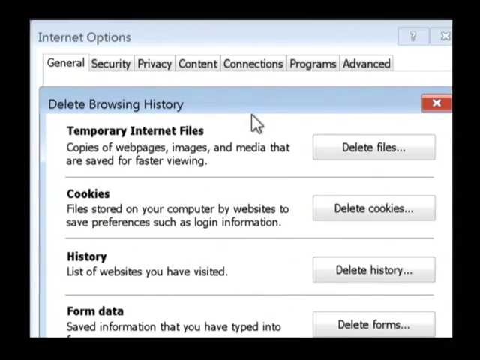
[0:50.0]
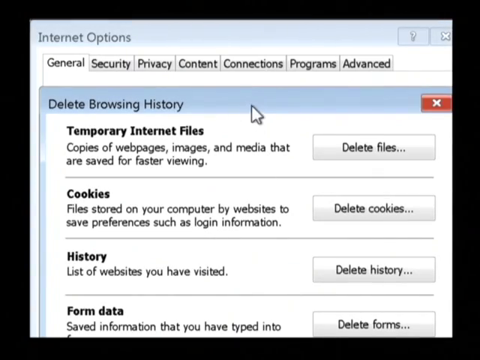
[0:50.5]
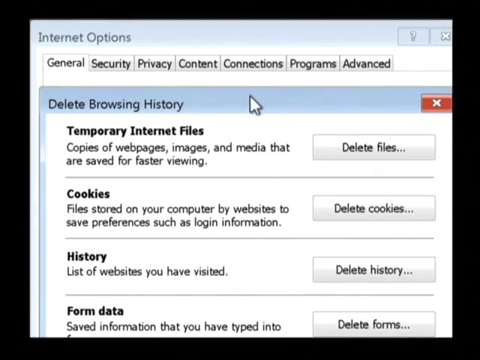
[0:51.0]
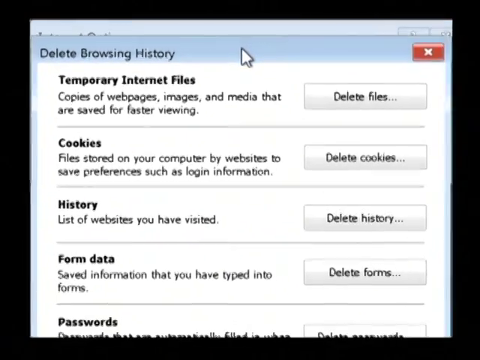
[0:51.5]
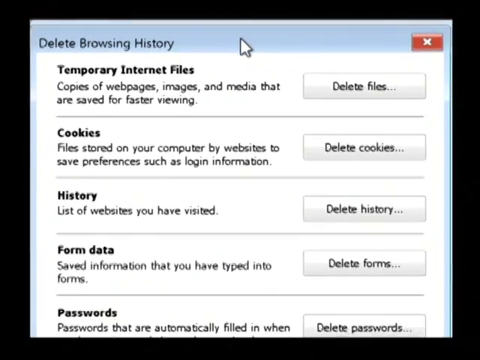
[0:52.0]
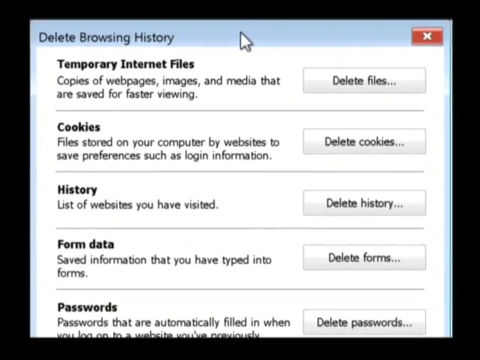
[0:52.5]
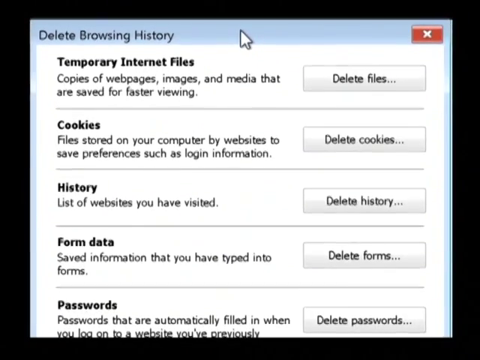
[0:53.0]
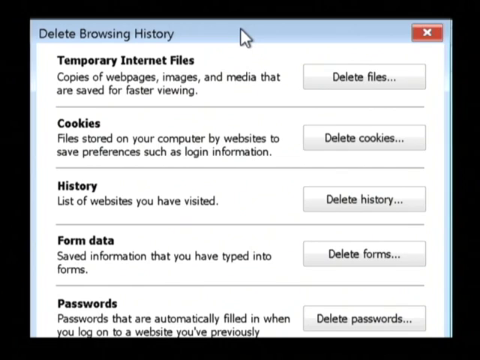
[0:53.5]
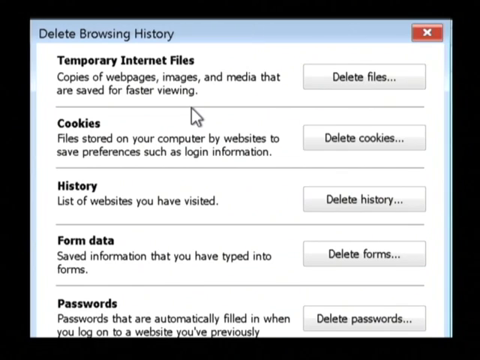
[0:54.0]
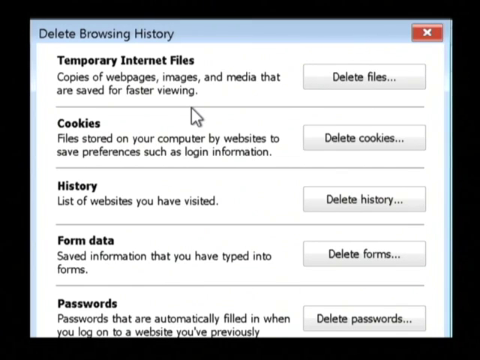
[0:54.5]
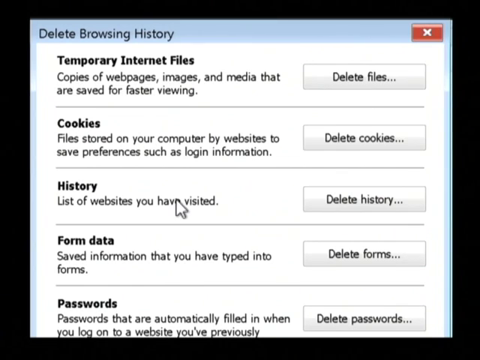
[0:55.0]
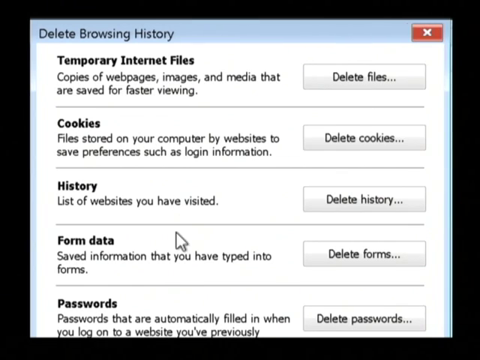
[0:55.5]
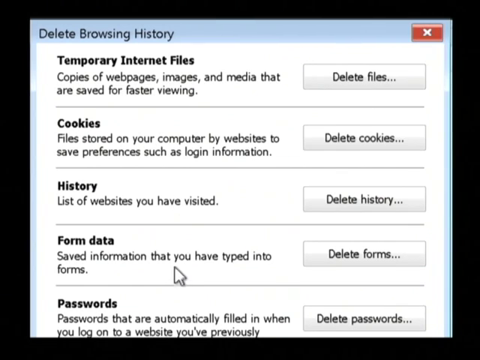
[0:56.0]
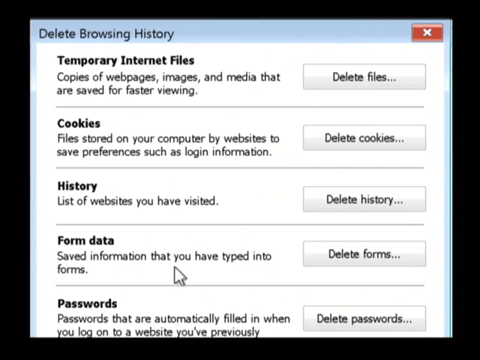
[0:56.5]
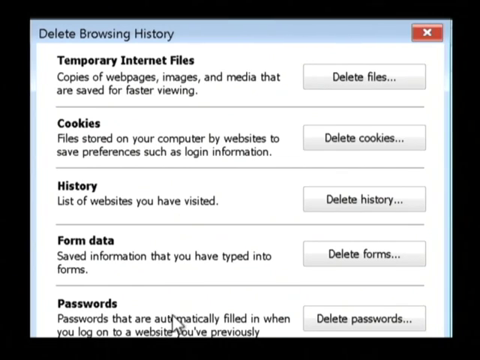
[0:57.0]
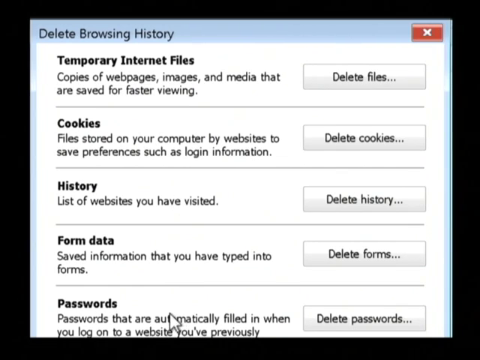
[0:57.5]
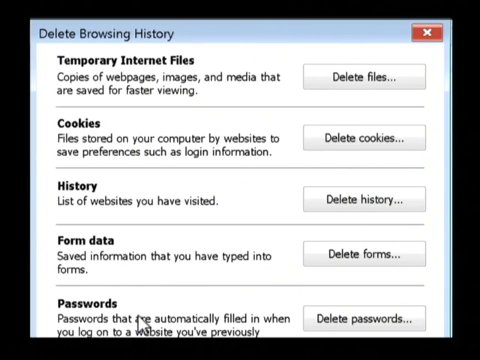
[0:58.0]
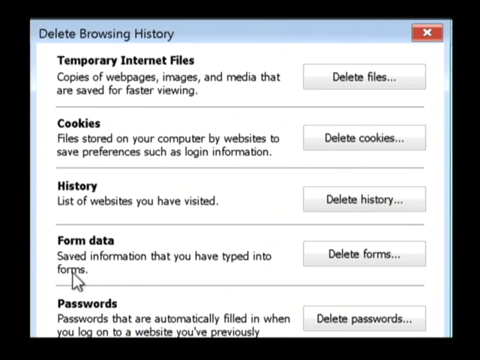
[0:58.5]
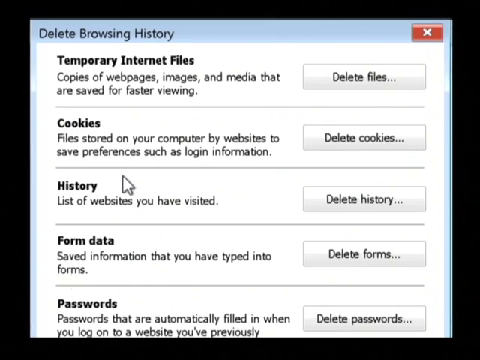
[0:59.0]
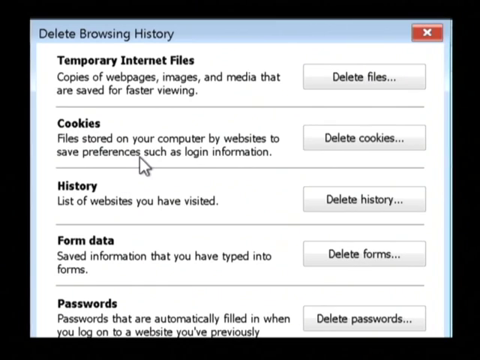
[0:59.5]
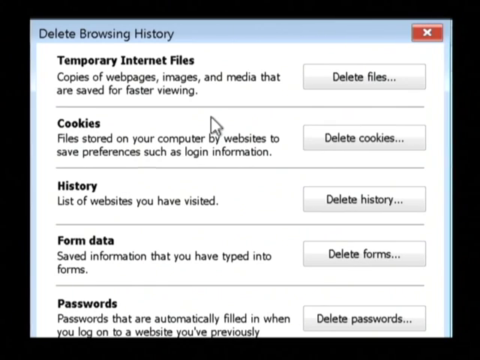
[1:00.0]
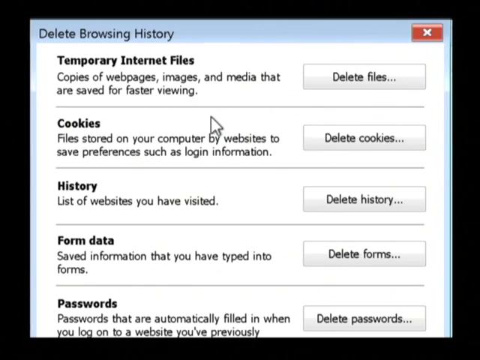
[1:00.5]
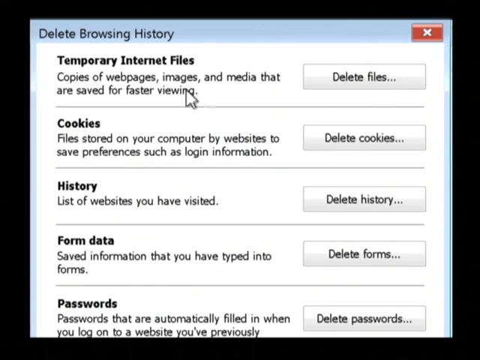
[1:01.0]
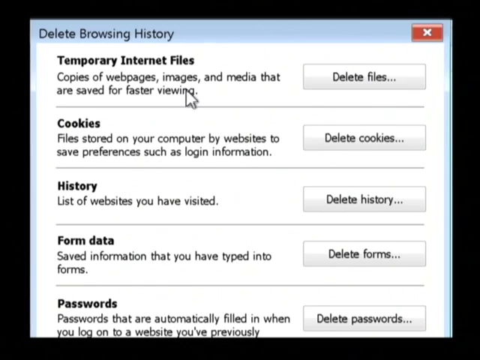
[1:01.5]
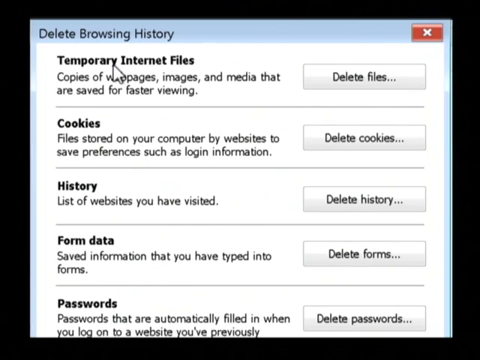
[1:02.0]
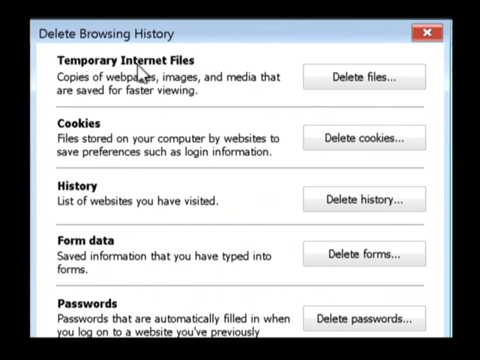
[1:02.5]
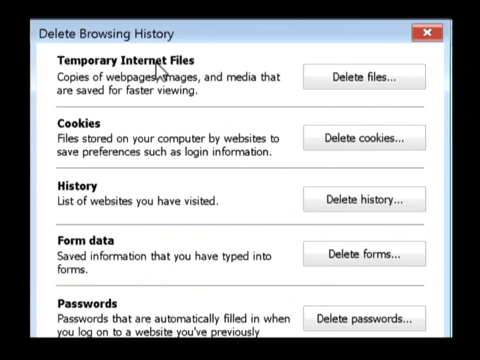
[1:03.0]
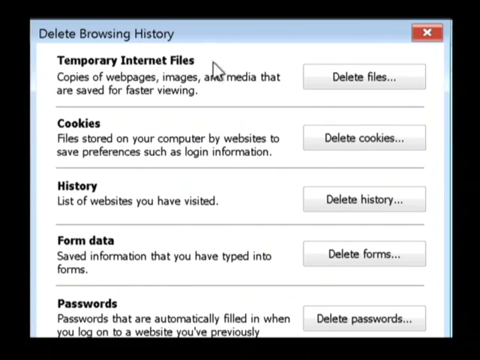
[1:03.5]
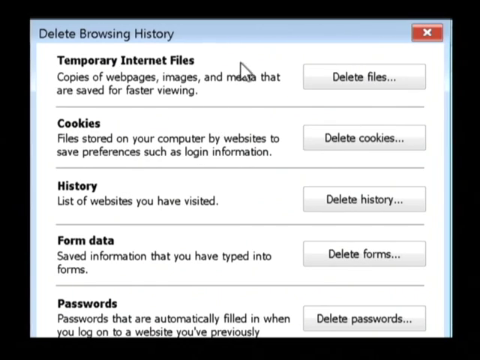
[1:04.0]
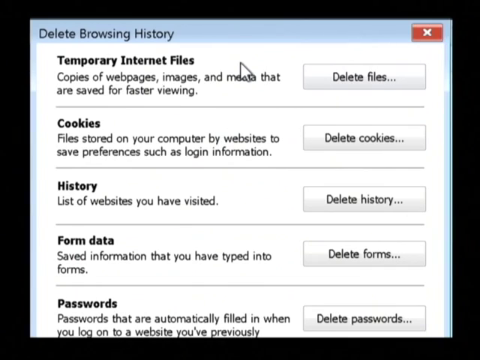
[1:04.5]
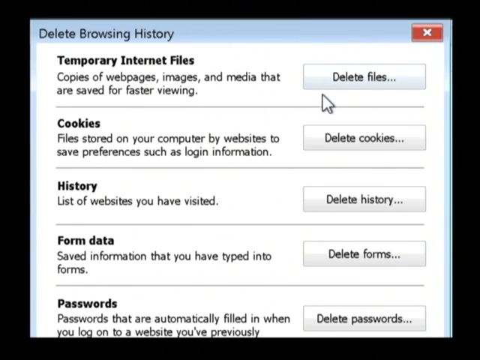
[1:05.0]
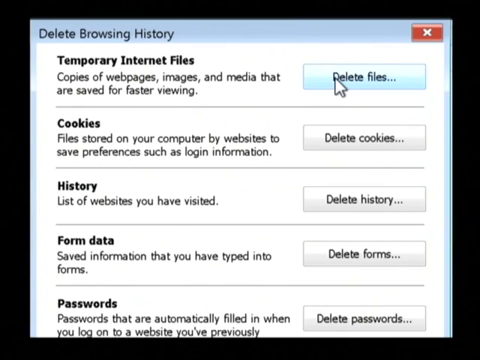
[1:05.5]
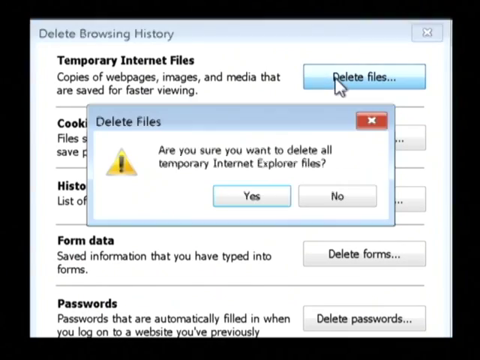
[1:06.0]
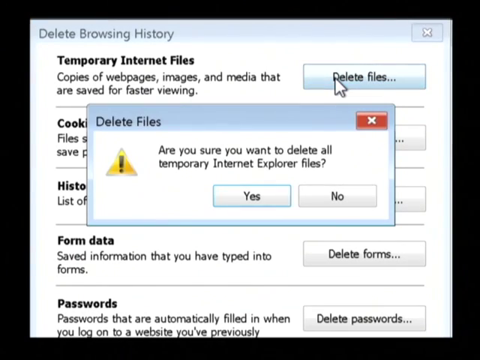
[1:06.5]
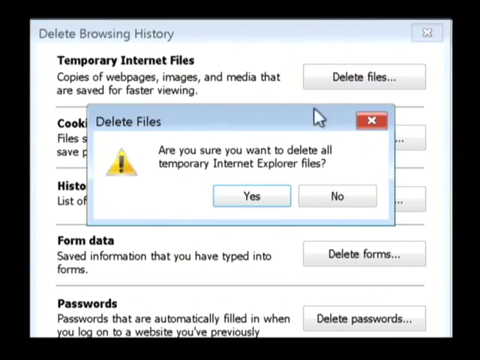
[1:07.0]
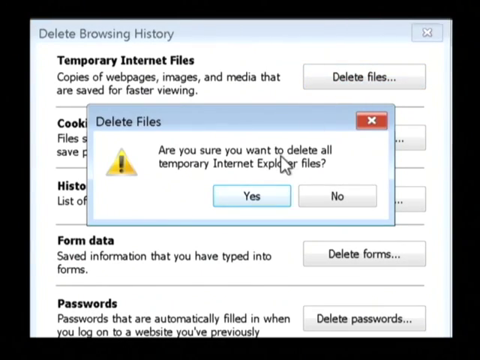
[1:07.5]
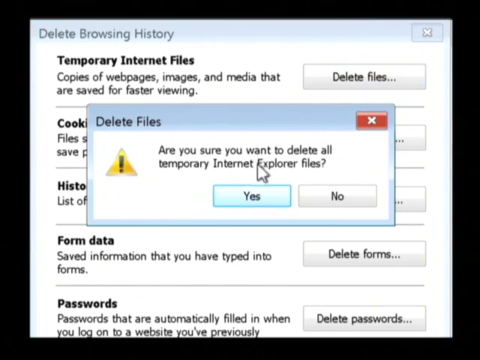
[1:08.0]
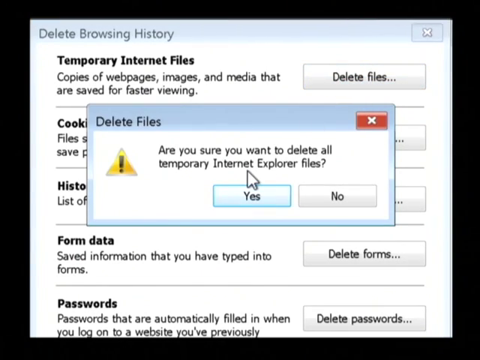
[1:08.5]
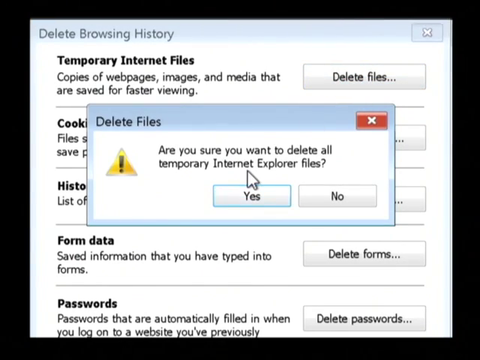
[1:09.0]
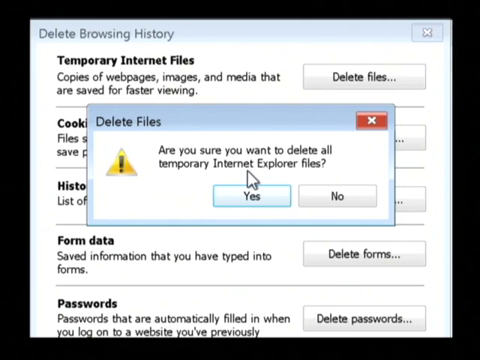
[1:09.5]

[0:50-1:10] The Delete Browsing History window is on screen. Its options include Temporary Internet Files, with a Delete Files button; below that, Cookies, with a Delete Cookies button to the right; next, History, with a Delete History button to the right; below that, Form Data, with a Delete Forms button to the right; and lastly what appears to be Passwords, with a Delete Passwords button to the right. The cursor moves down to the passwords field, then up to cookies and temporary internet files, and clicks Delete Files to the right of Temporary Internet Files. A confirmation window comes up asking "are you sure you want to delete all temporary internet explorer files," and the user clicks the Yes button.